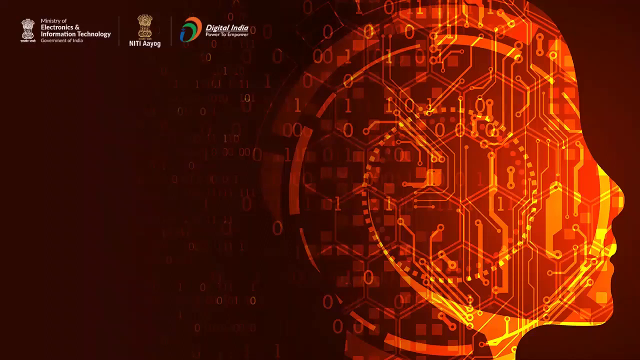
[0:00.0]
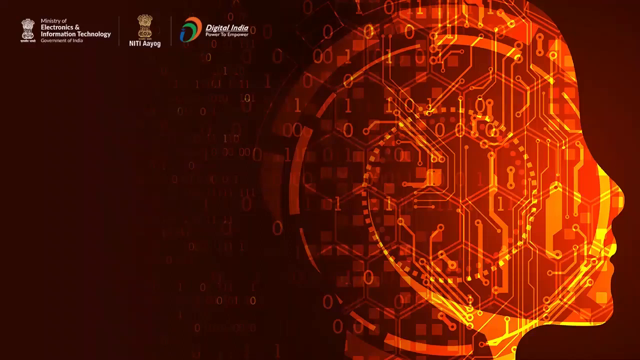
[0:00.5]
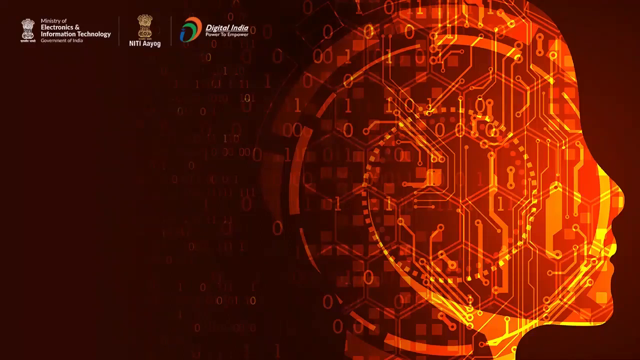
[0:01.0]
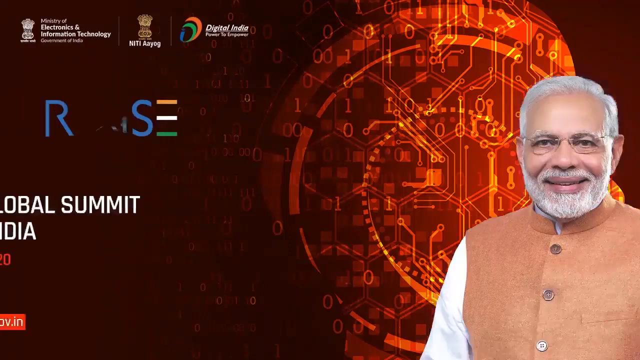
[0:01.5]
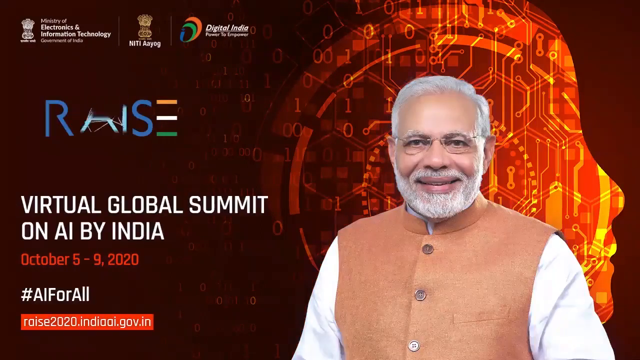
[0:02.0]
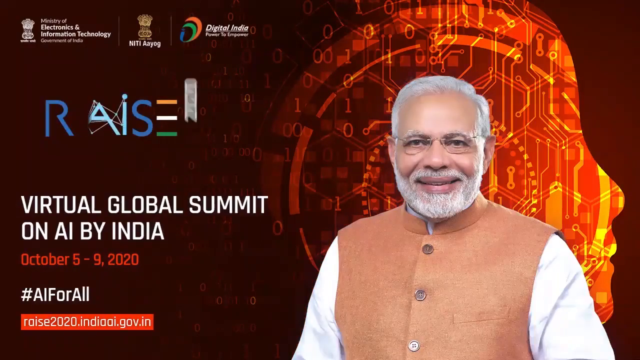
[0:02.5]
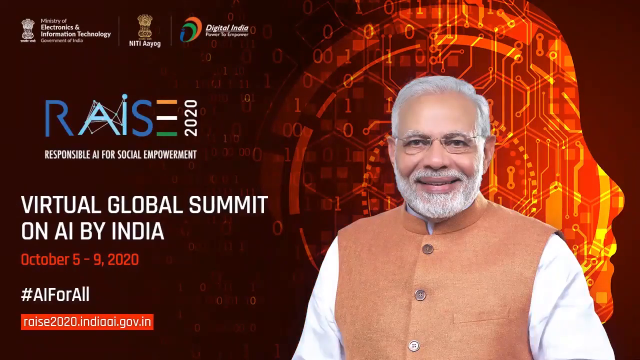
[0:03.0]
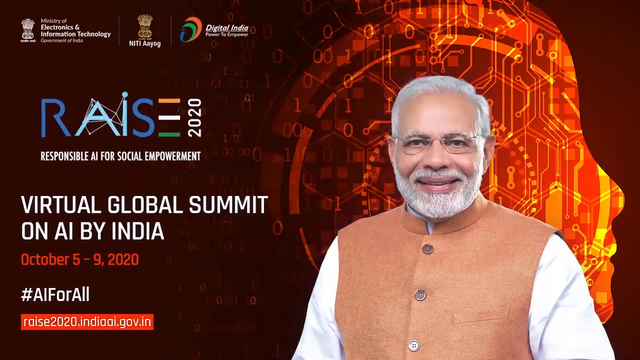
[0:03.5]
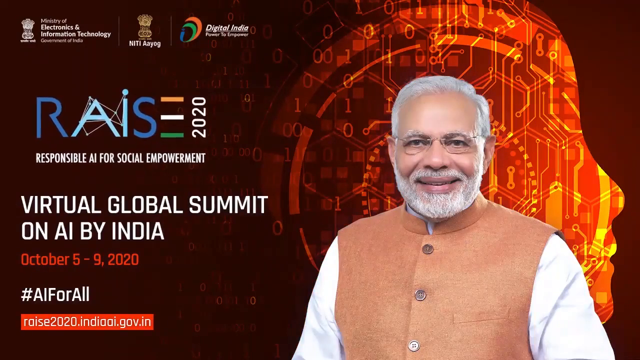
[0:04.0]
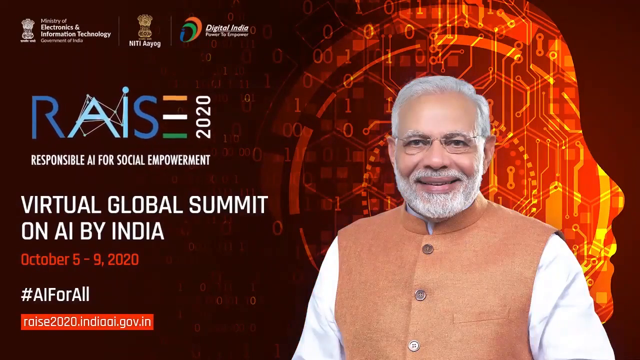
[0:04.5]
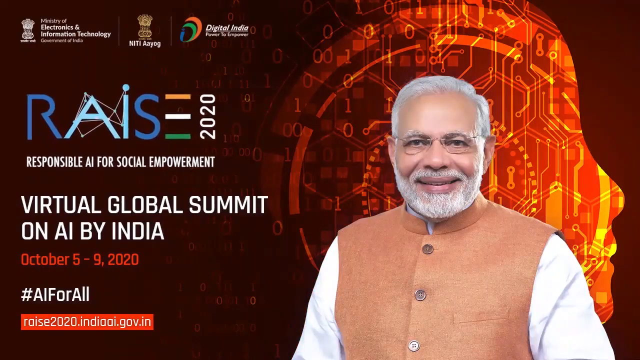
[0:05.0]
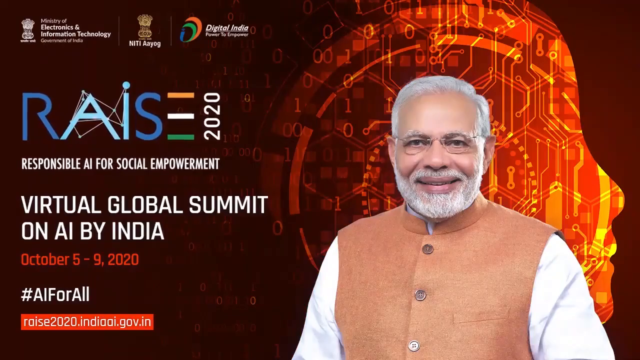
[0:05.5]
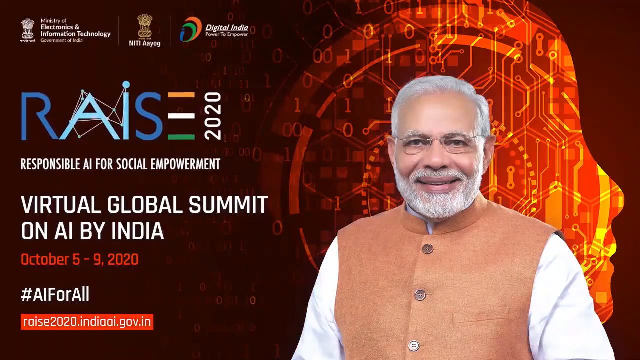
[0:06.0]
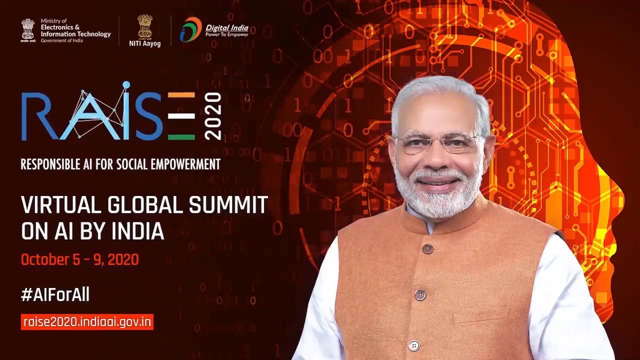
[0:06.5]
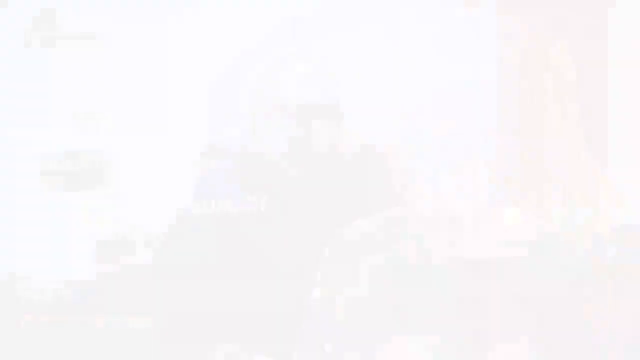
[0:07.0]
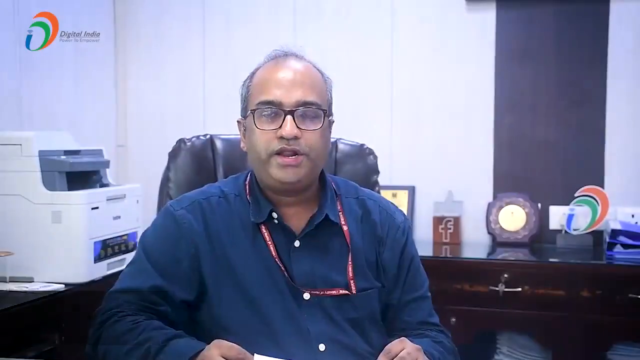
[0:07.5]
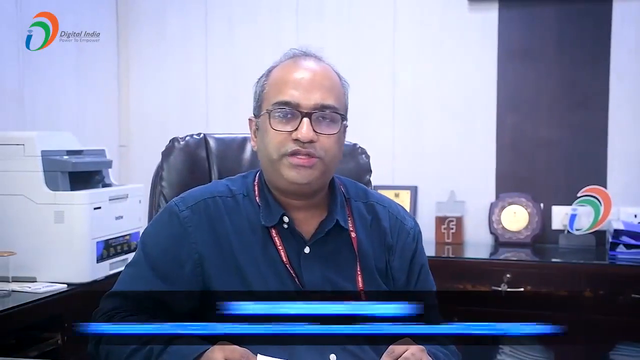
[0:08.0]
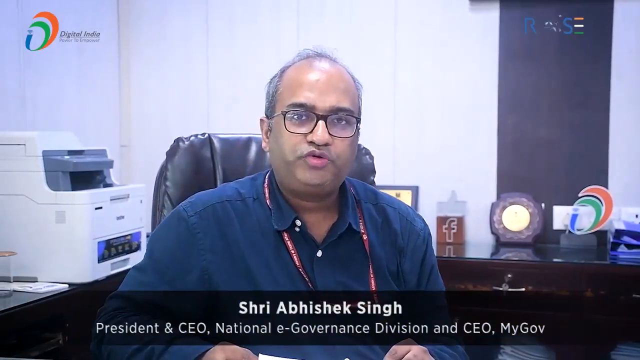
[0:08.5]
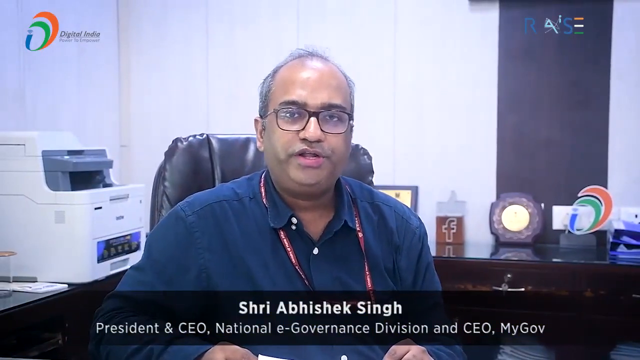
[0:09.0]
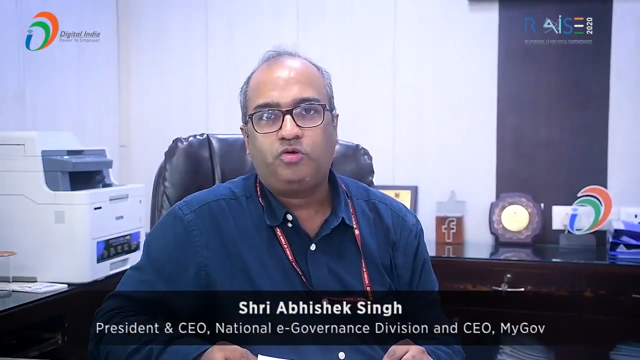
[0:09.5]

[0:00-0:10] The video is about a summit on AI by India, called RISE 2020, held from 5th October to 9th October 2020, with the motto responsible AI for social empowerment.